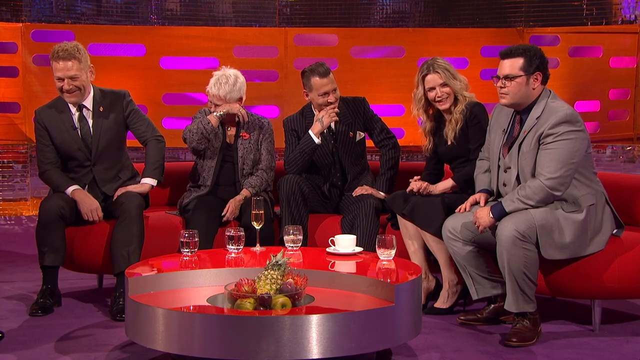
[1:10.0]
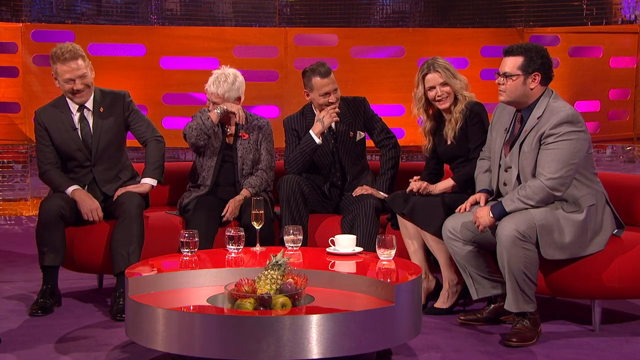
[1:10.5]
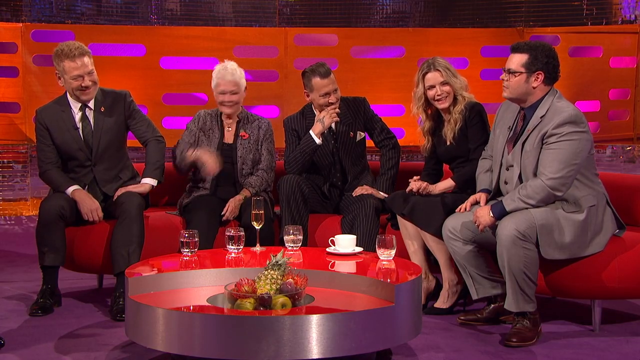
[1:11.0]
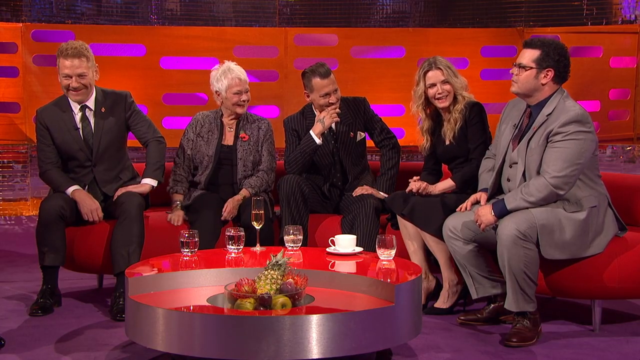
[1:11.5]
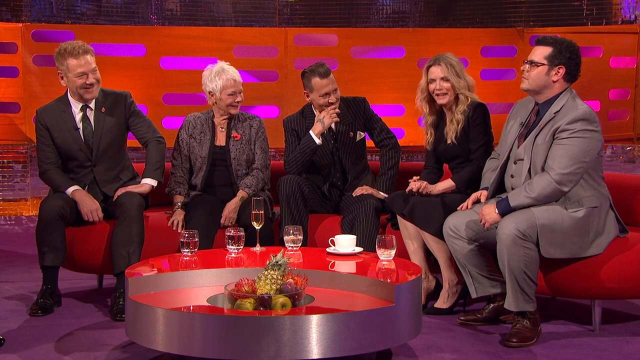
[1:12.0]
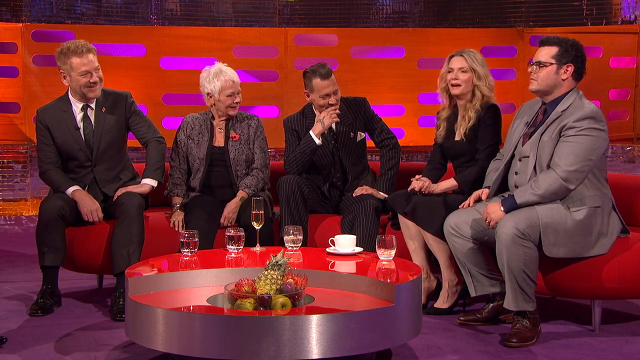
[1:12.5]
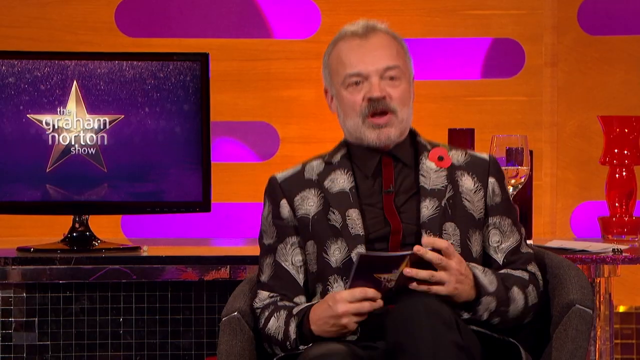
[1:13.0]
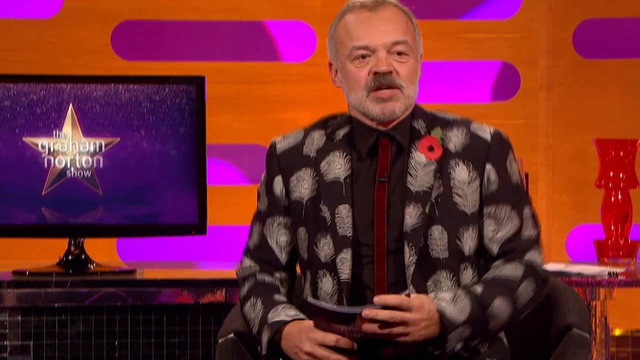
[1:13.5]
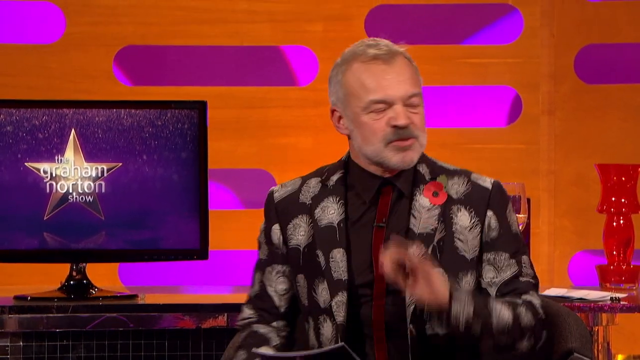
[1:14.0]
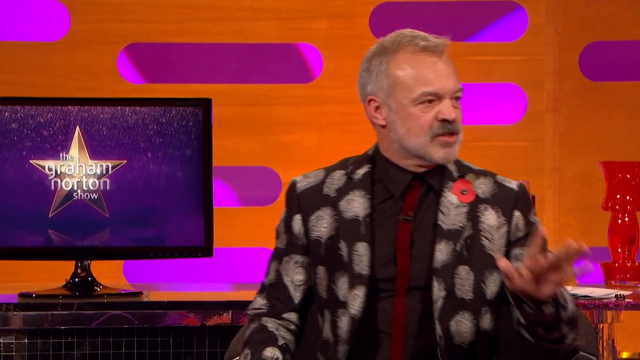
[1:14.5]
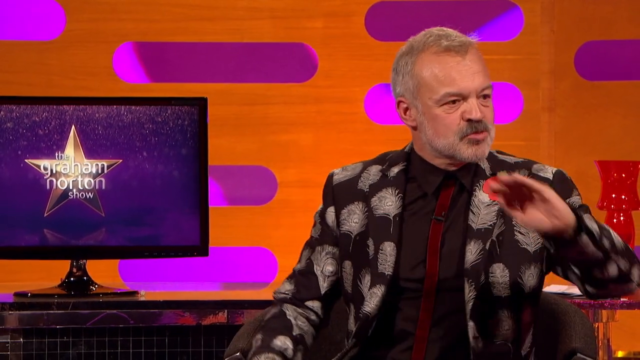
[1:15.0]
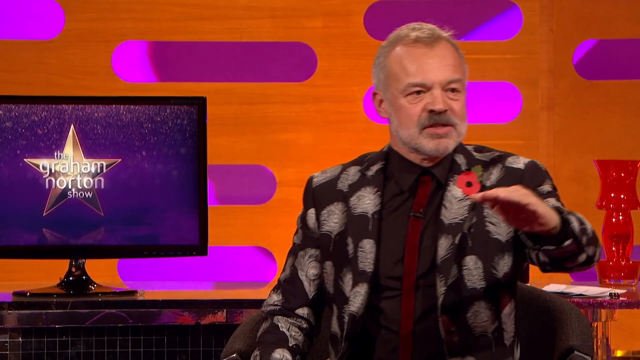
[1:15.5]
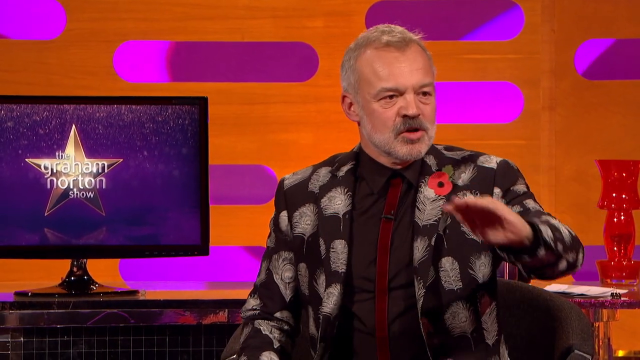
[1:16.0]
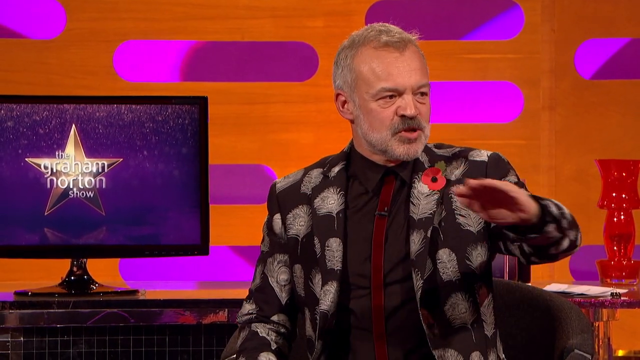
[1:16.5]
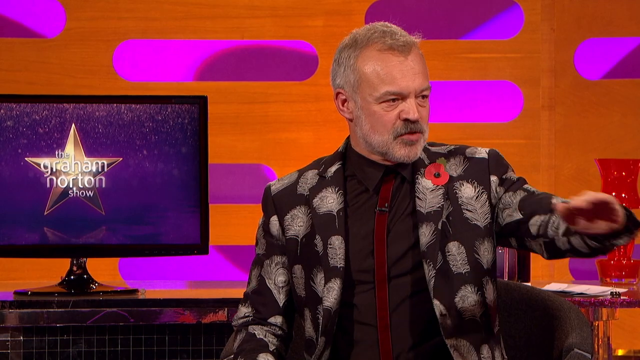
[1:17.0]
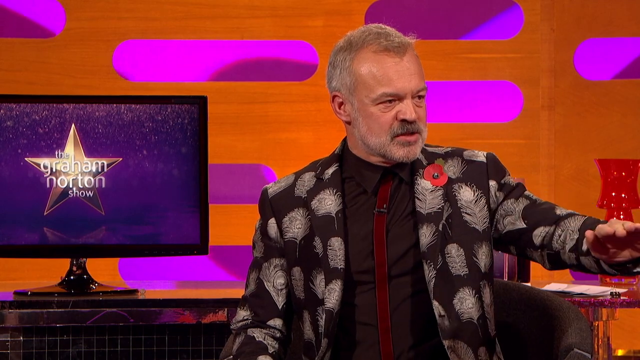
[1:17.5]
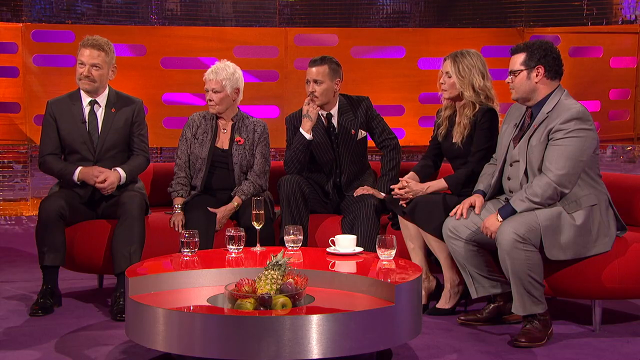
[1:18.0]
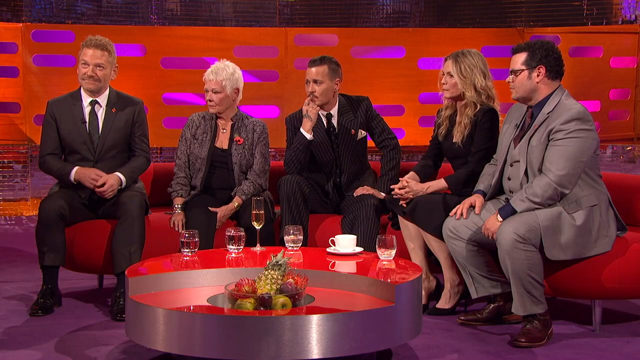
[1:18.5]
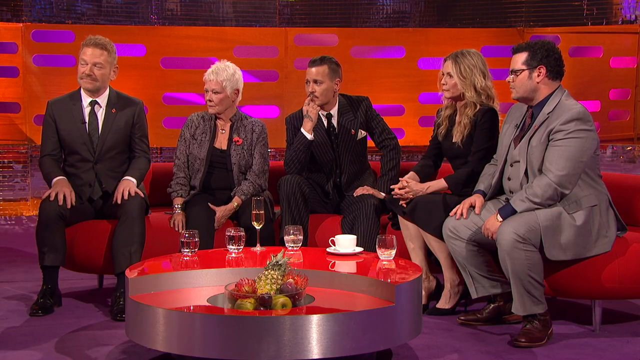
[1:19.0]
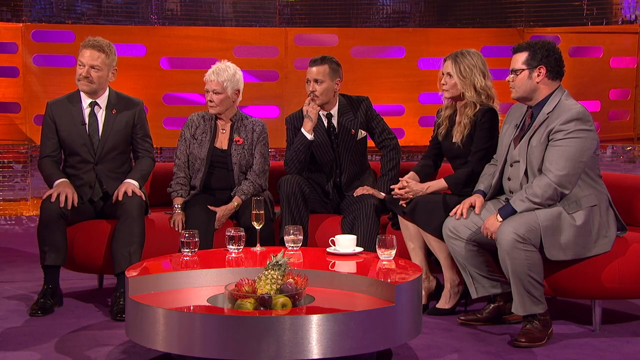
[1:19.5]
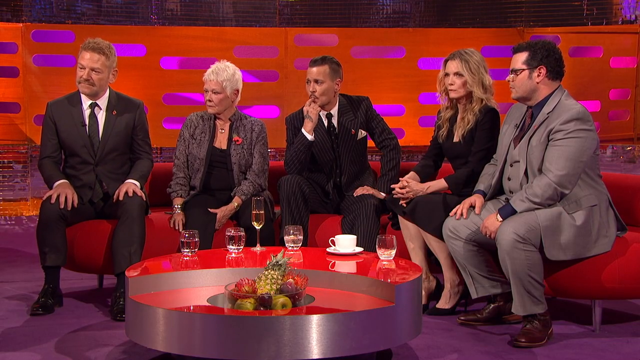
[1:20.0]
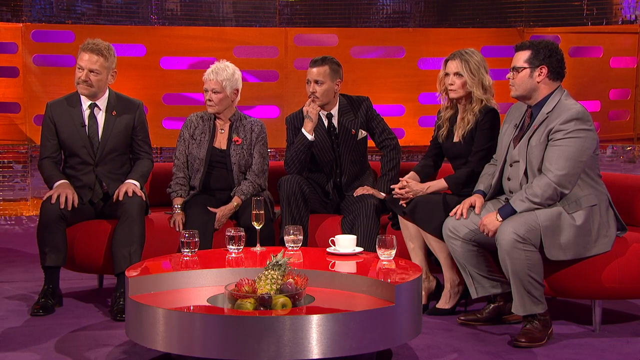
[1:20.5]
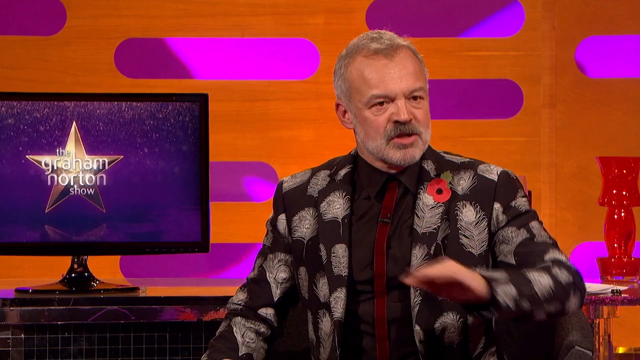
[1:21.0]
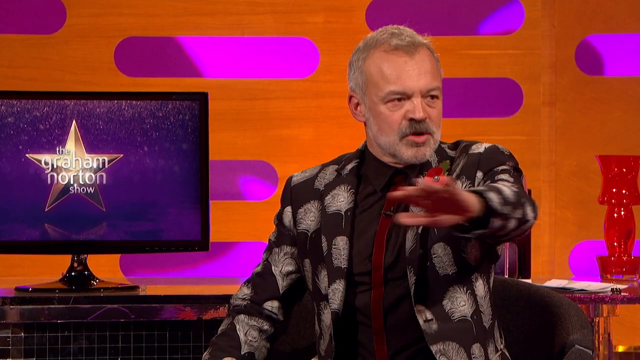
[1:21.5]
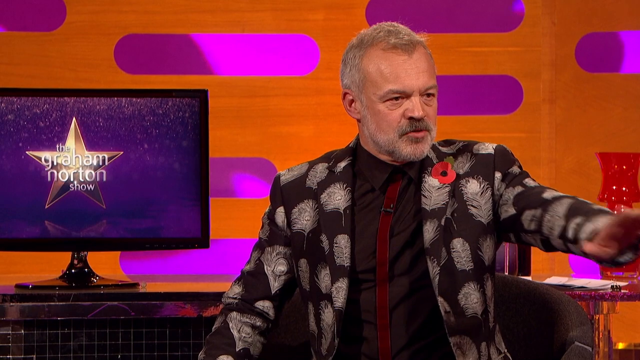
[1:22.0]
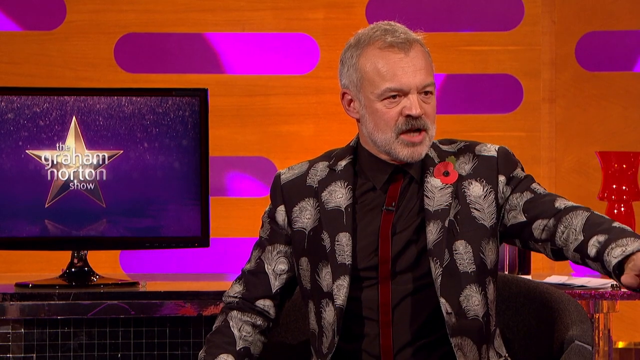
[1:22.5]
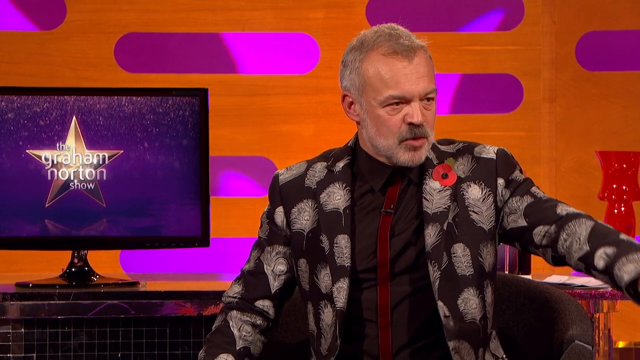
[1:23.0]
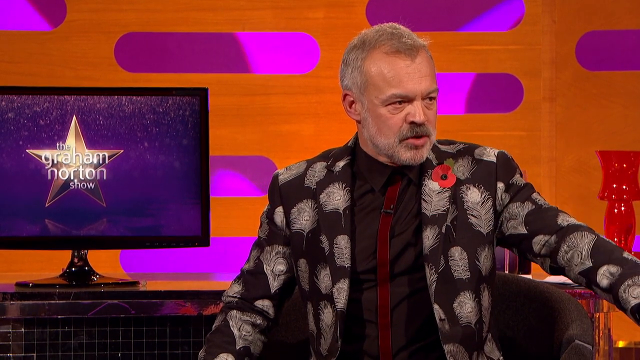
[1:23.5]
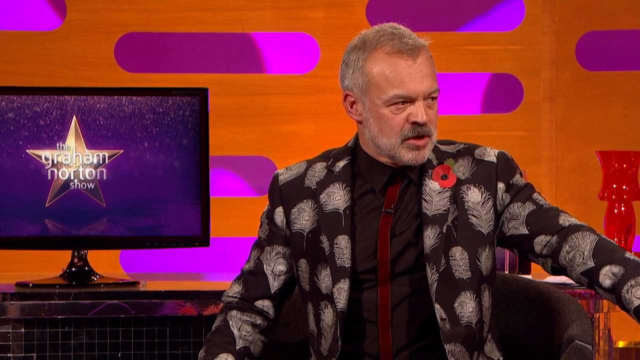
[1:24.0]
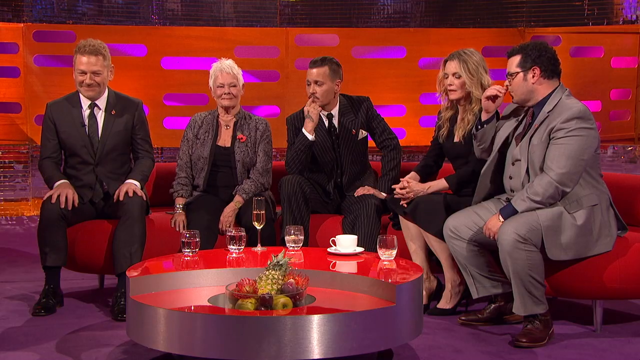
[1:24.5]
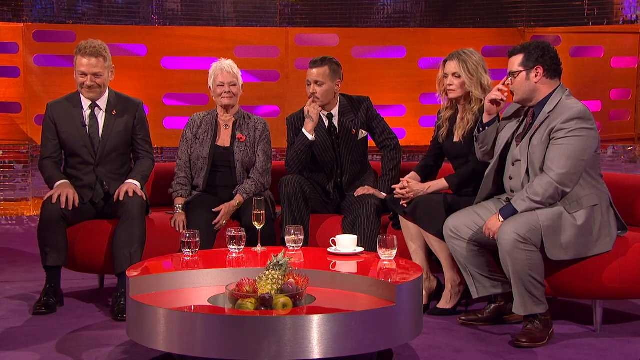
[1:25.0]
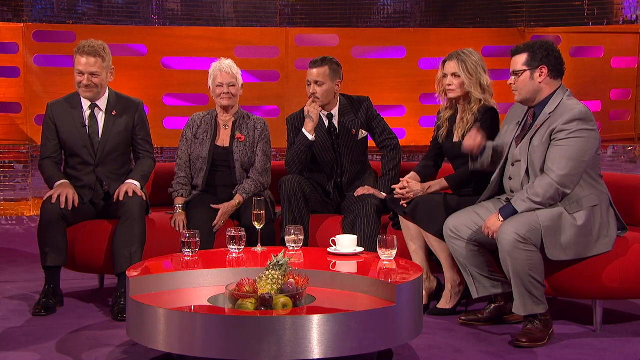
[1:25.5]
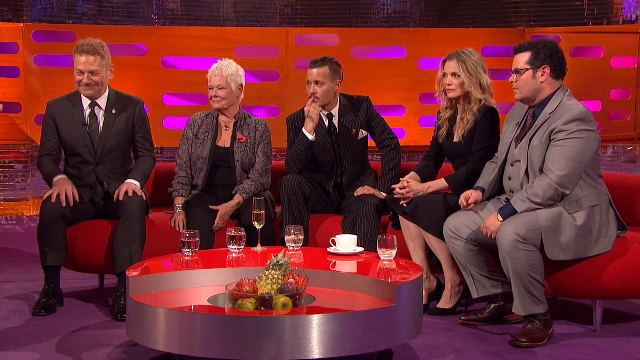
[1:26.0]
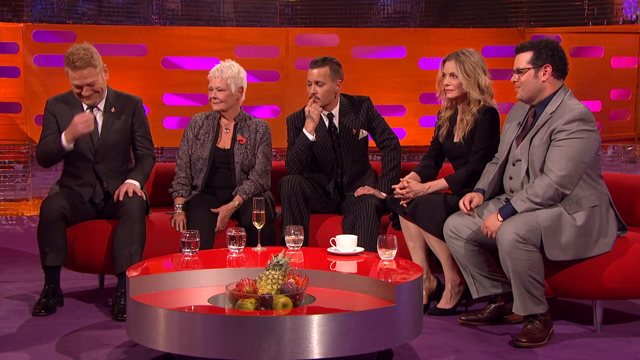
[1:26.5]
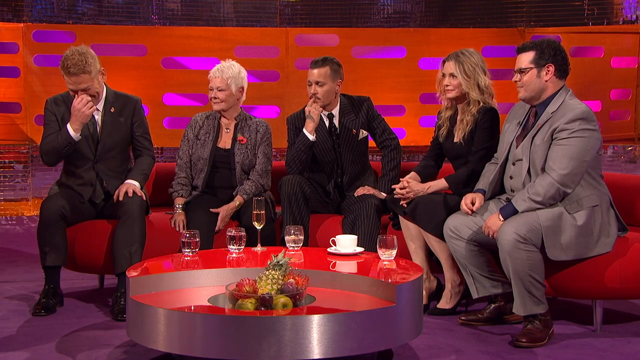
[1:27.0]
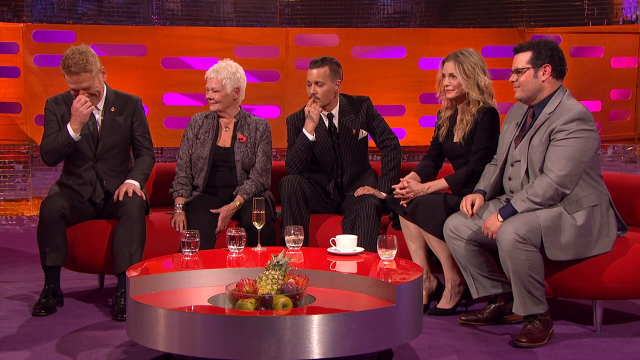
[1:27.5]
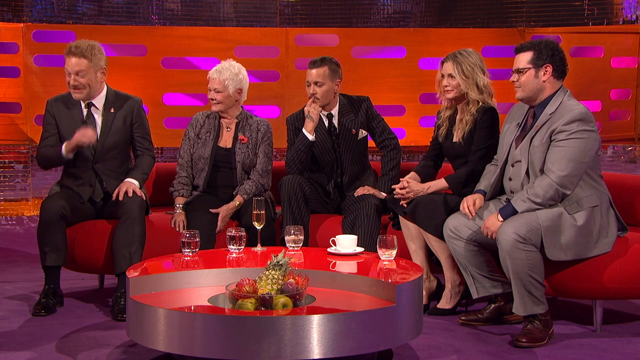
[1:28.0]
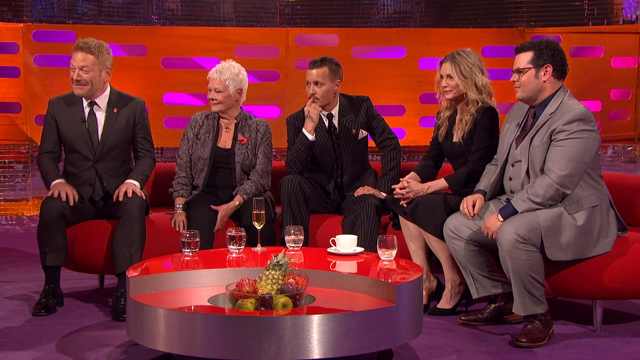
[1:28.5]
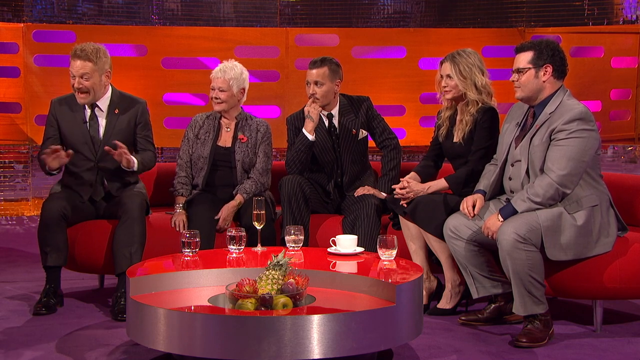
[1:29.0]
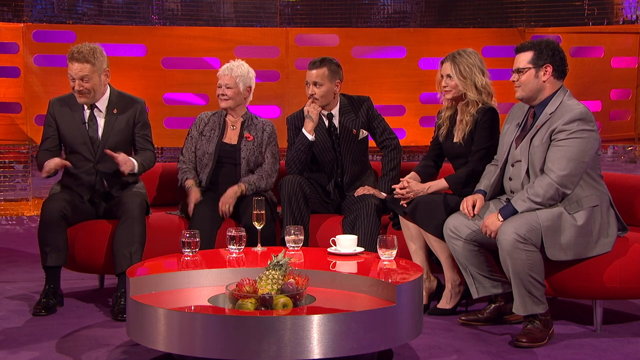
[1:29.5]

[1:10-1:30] The blonde-haired woman looks toward the man in the gray suit with her hands together, then kind of fixes her hair. The camera pans to the host with the cards in his hands; he fixes his posture, sits up straight, and gestures with his left hand, holding his hand straight and flat. The camera pans back to the group on the seats: the woman with the gray hair has her left hand on her right thigh, seemingly pinching the inner thigh; Johnny Depp has his right hand at his mouth again; the man in the gray suit sits focused on the host; the man in the black suit has both hands on his knees; and the blonde-haired woman has her fingers interlaced. The camera returns to the host, still gesturing with his left hand and looking at the group. The man in the gray suit scratches his nose and fixes his glasses with his right hand. The man in the black suit seems to laugh, pinches his nose, and laughs while gesturing upward with both hands.